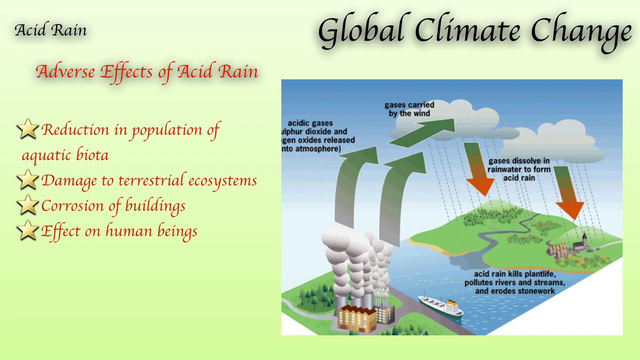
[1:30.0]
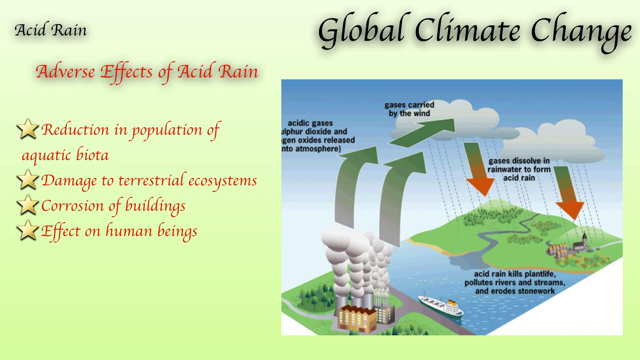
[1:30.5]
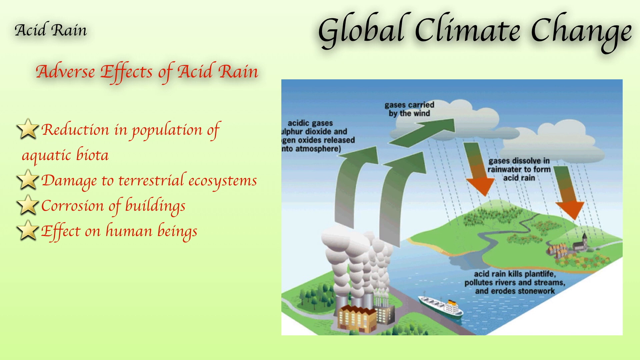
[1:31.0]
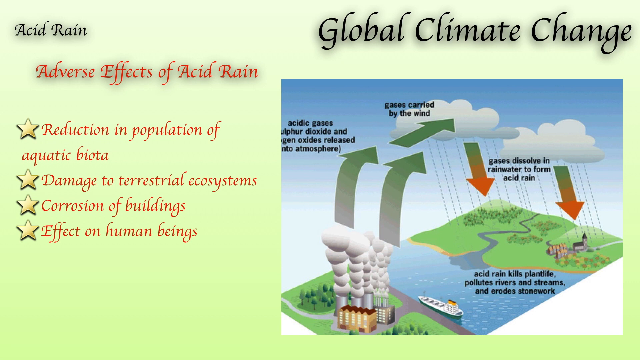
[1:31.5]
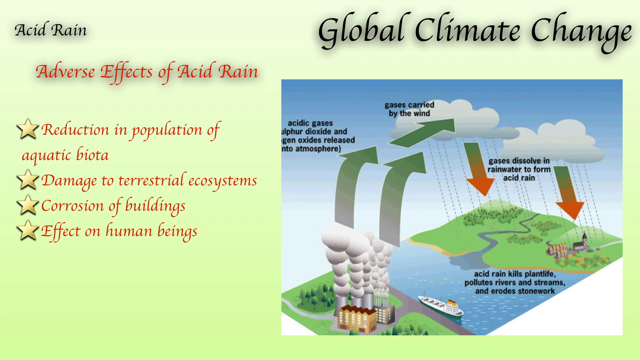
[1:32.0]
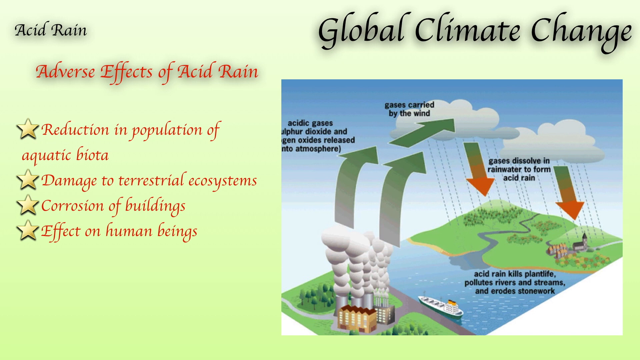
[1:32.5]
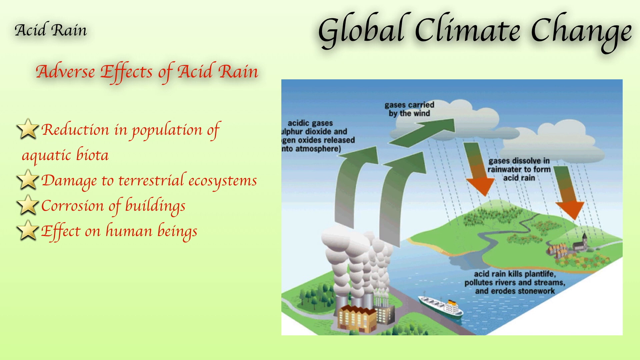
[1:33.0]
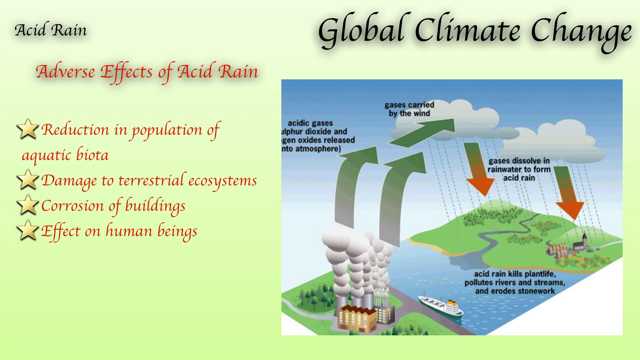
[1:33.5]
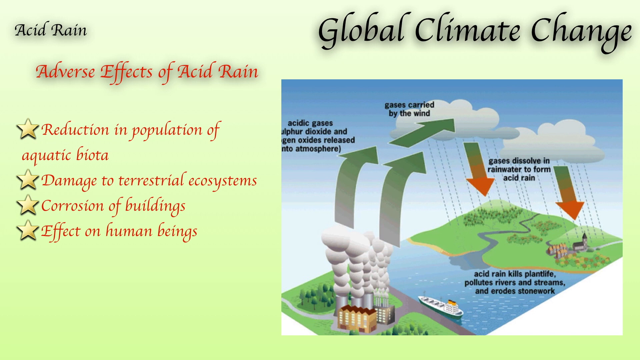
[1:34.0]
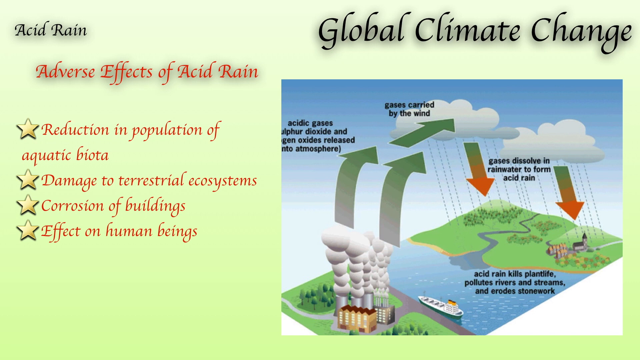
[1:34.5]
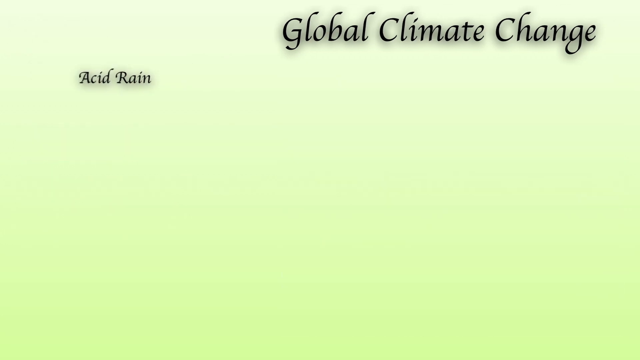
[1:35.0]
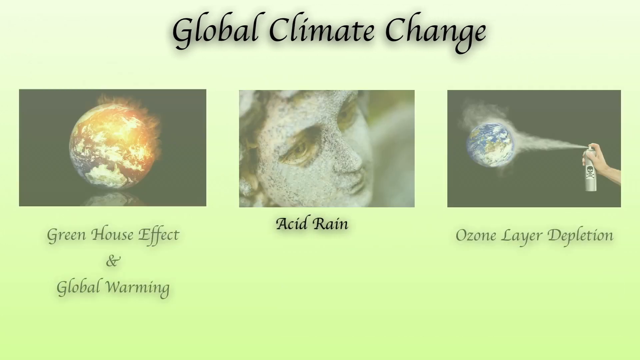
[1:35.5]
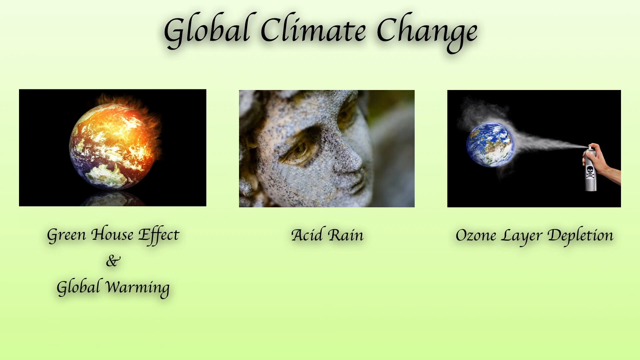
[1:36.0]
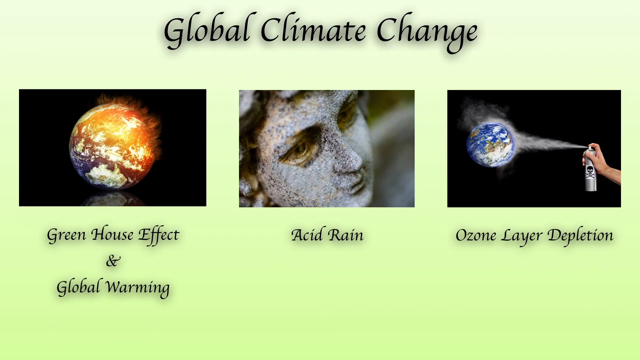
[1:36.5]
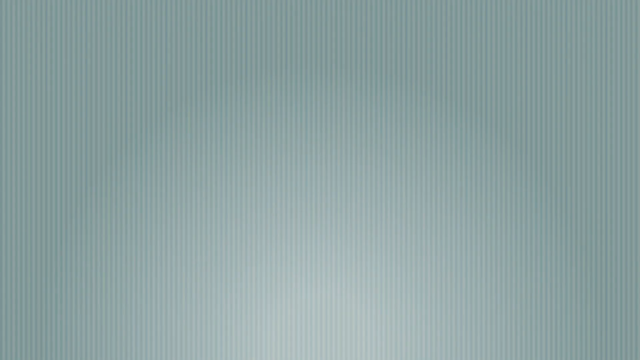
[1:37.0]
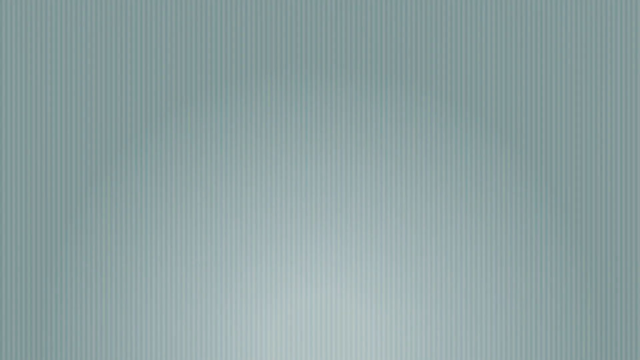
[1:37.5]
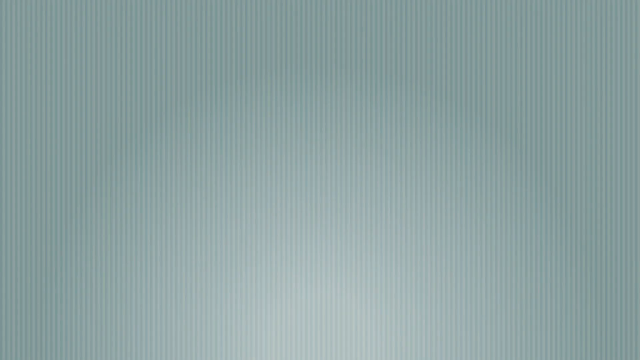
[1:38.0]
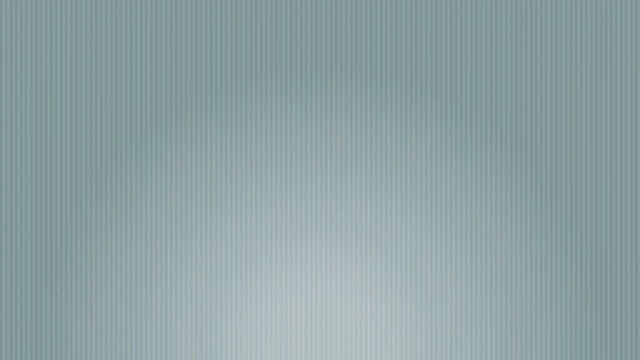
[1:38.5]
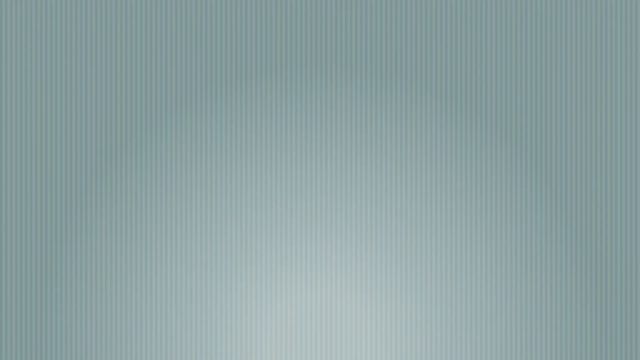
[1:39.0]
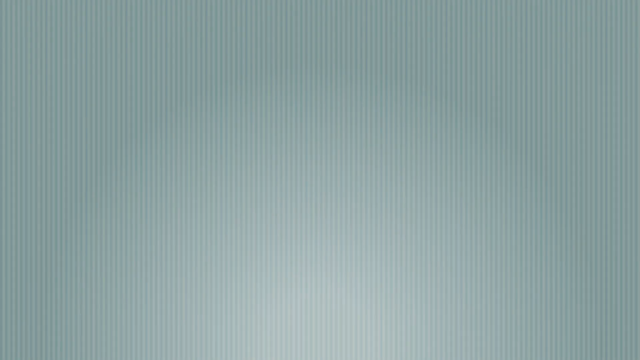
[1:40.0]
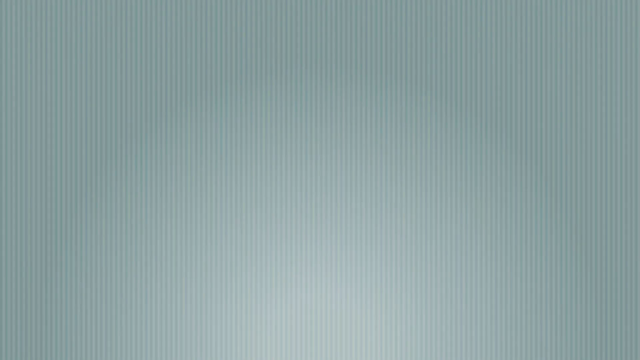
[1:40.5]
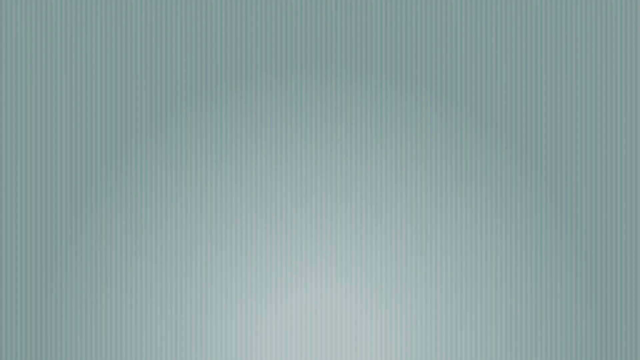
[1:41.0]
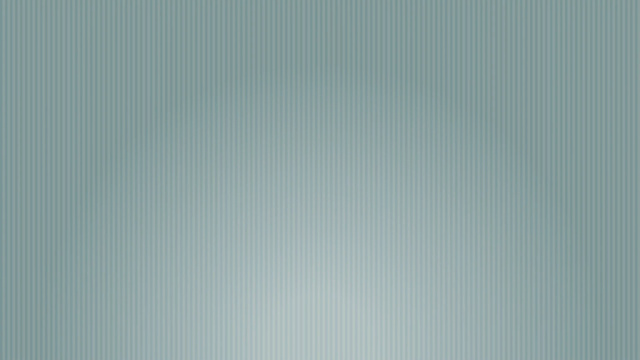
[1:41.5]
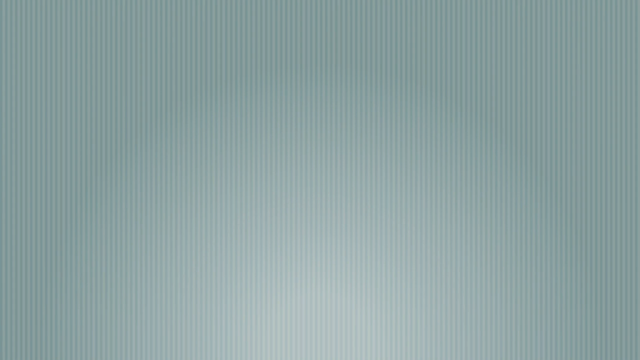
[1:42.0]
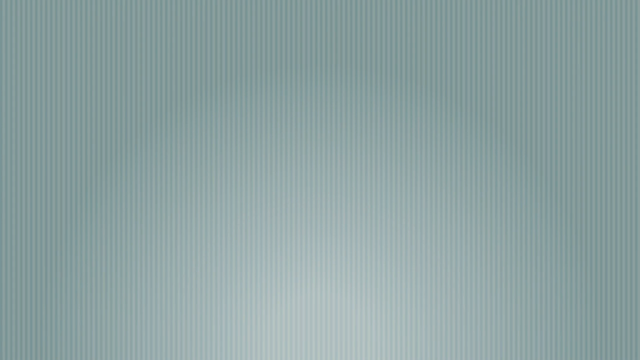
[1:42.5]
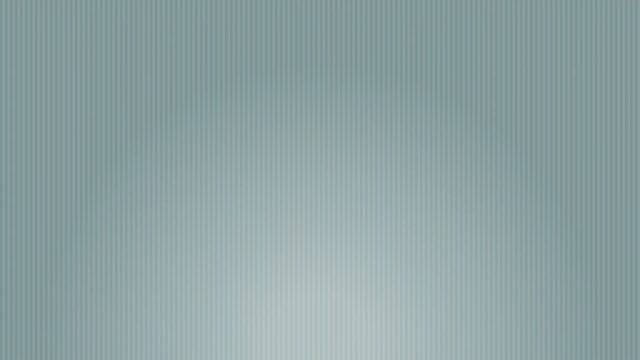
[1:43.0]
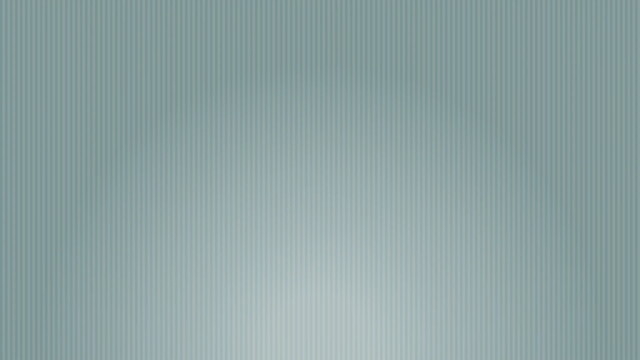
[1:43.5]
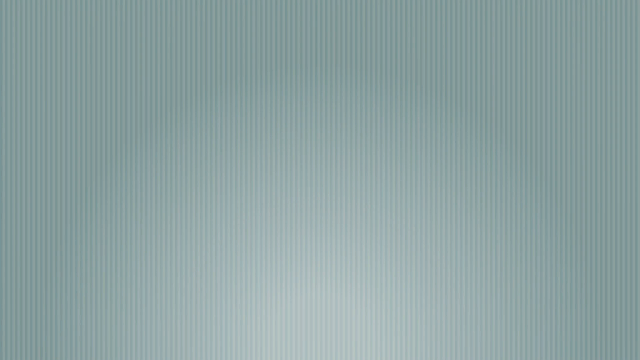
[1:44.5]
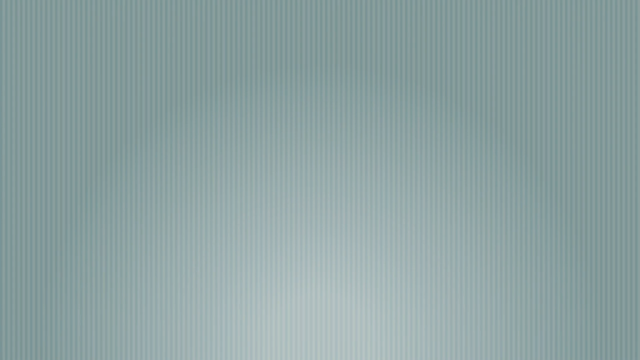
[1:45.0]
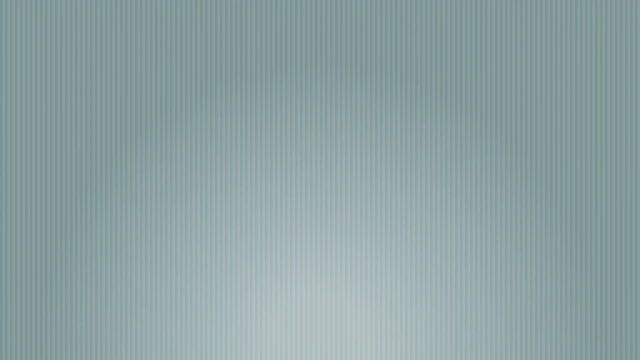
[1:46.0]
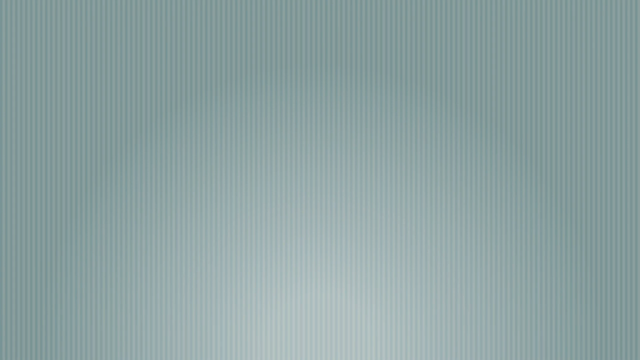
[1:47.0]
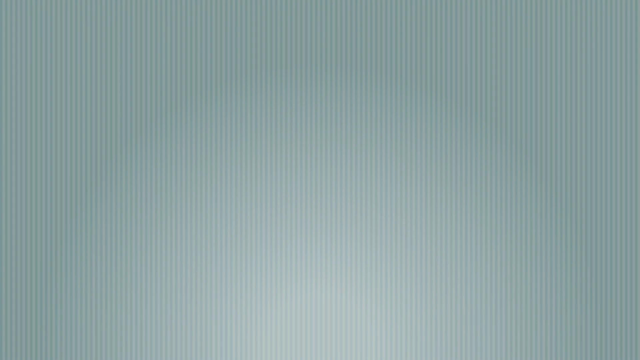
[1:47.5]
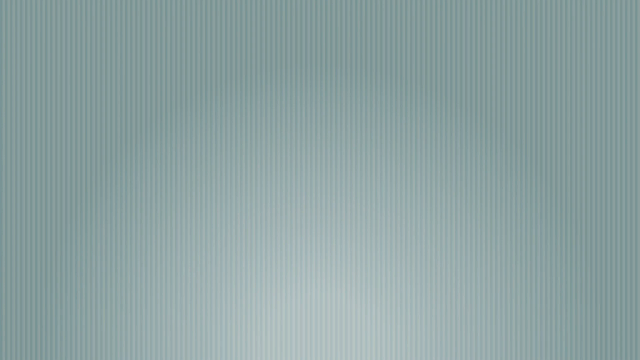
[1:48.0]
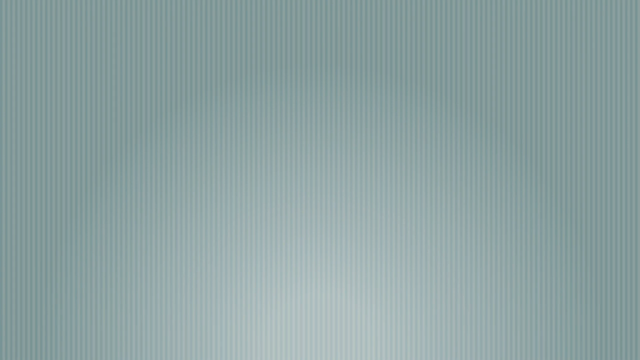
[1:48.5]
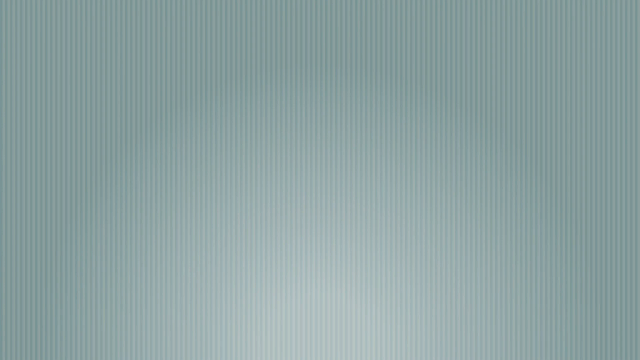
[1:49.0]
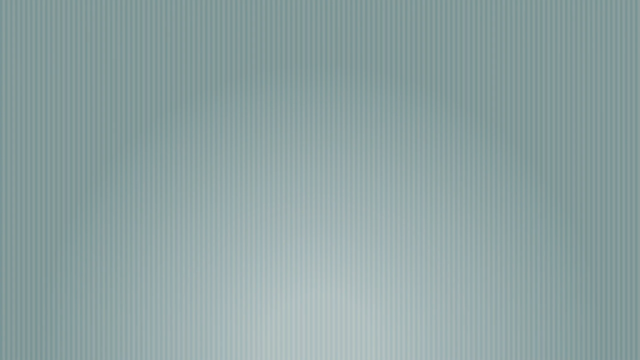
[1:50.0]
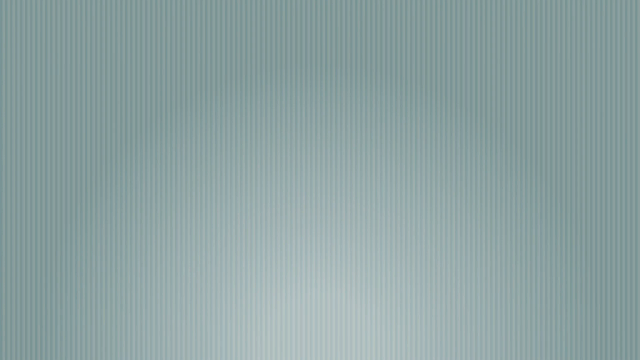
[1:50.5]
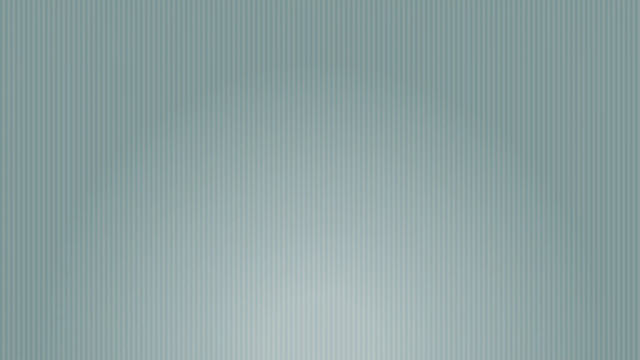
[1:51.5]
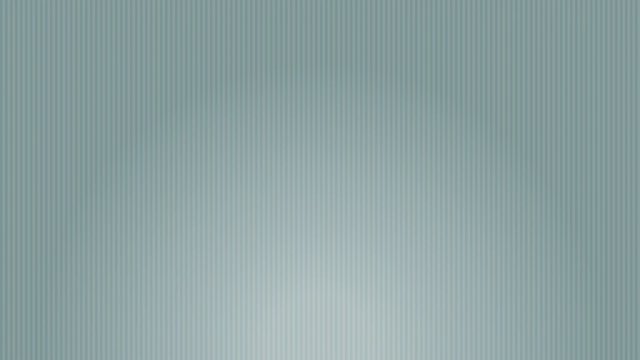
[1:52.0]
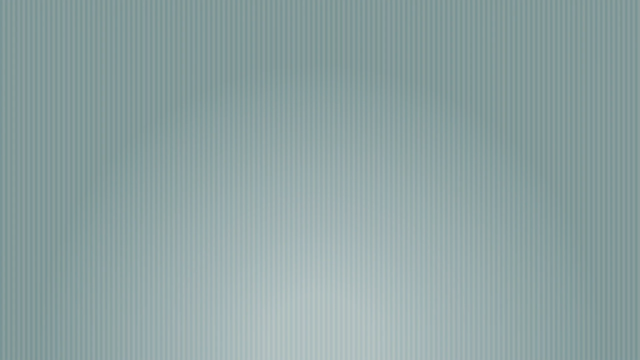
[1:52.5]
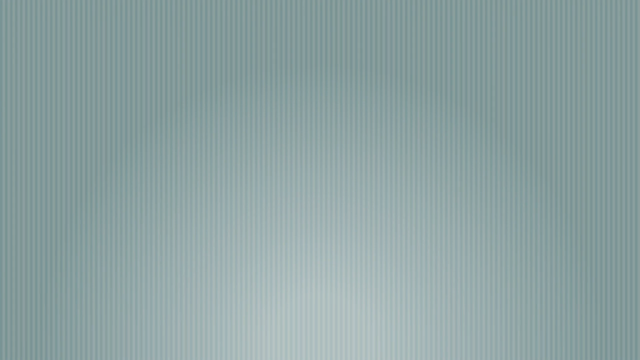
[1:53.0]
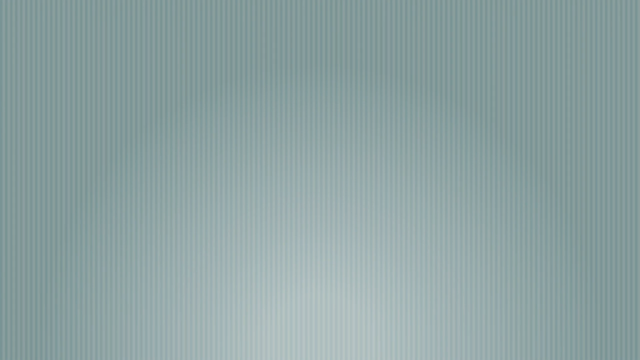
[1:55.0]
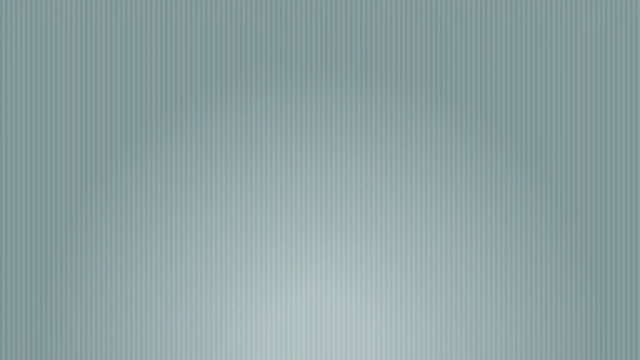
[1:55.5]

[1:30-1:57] The slide remains the same, with the black "acid rain" text on the top left, the global climate change text on the right, the visual of the acid rain process, and the red text highlighted. The slide then quickly shifts: climate change moves over, black text moves to the middle of the image, and it returns to the earlier slide with the acid rain statue, ozone layer depletion with a visual of someone spraying the earth, and greenhouse effect and global warming on the left side with a flaming-looking earth. Quickly this all disappears and a screen of just straight blue lines is shown, continuing for about 17 seconds until the end of the video.